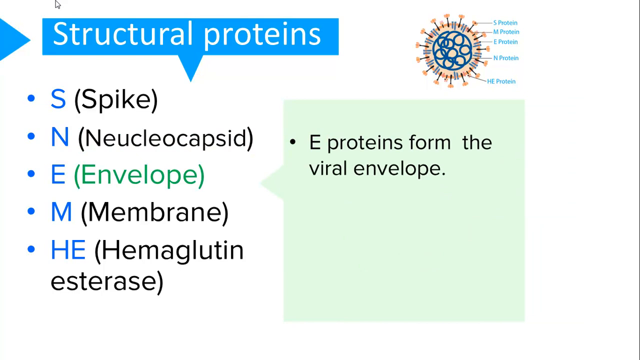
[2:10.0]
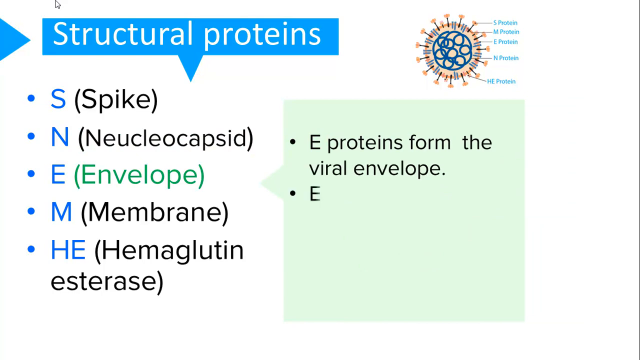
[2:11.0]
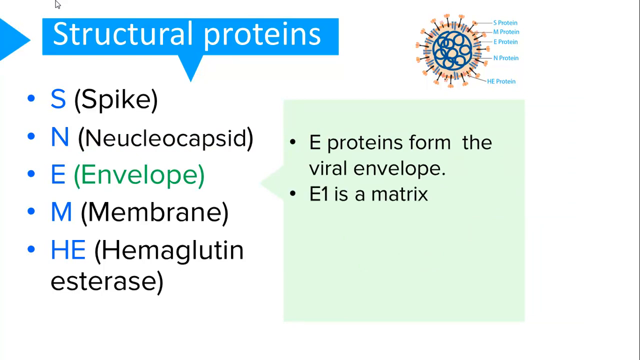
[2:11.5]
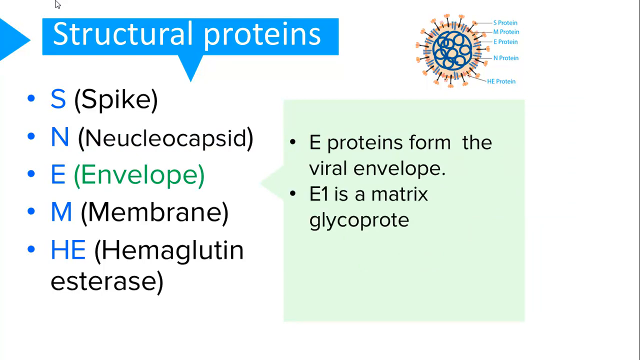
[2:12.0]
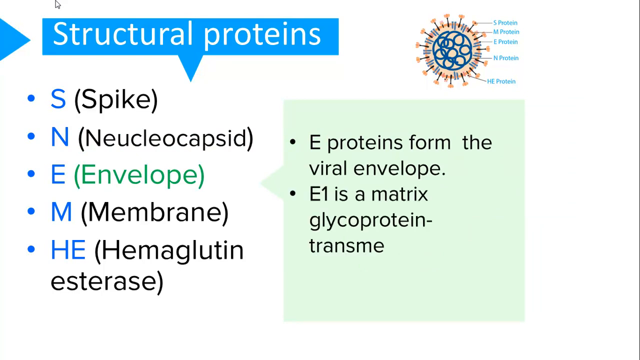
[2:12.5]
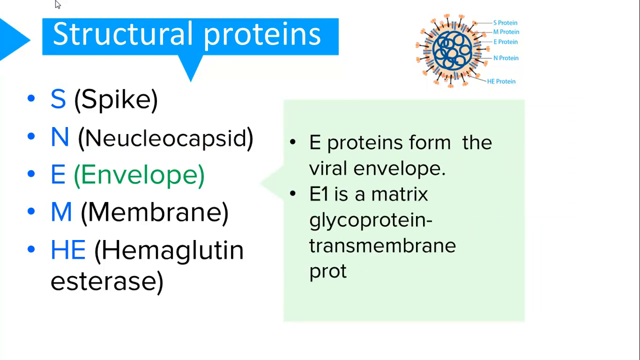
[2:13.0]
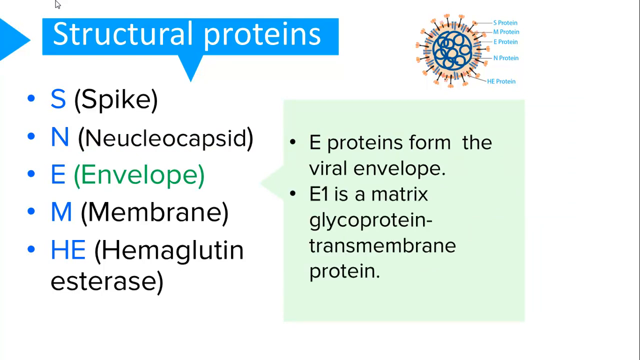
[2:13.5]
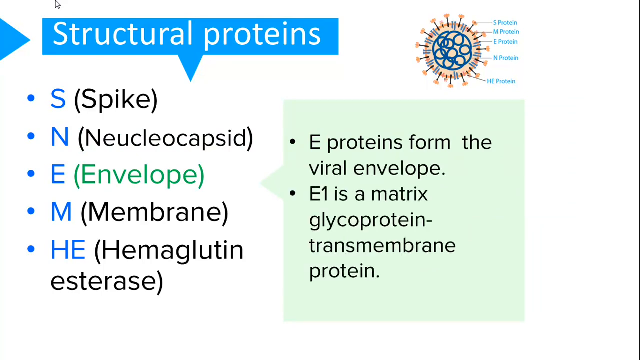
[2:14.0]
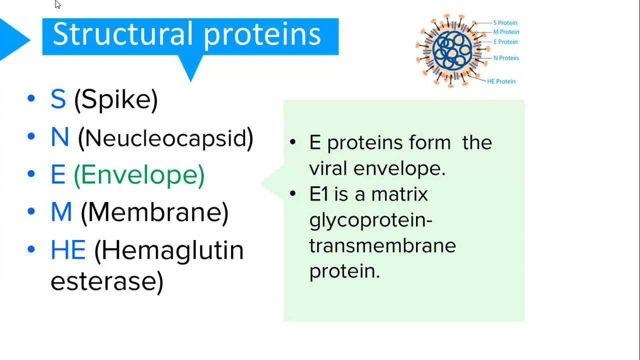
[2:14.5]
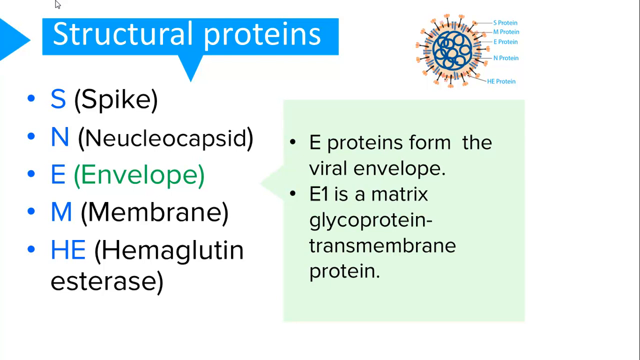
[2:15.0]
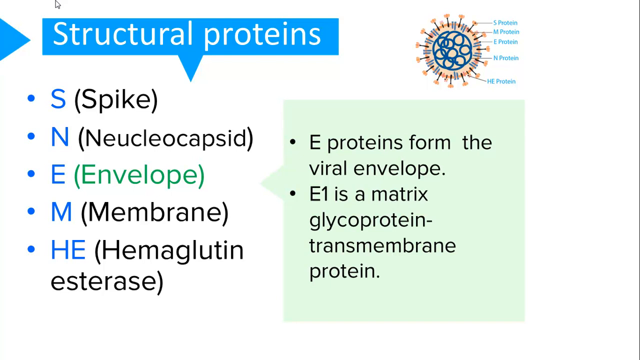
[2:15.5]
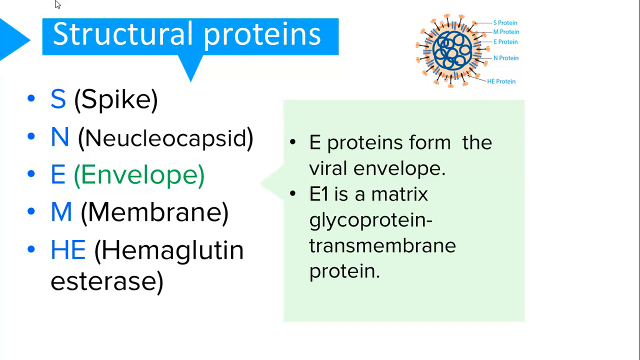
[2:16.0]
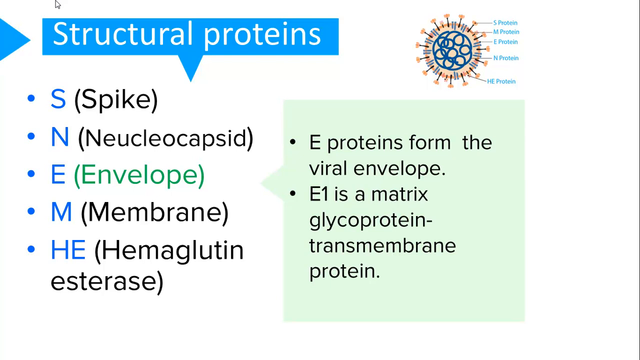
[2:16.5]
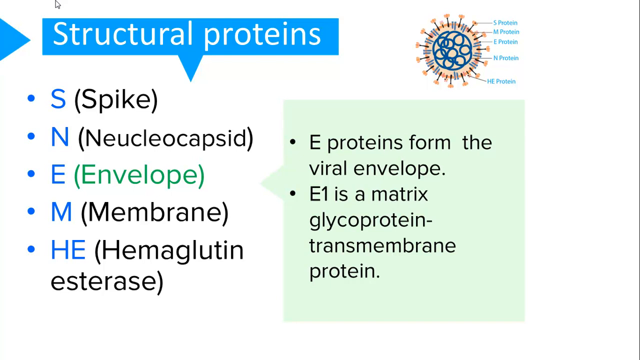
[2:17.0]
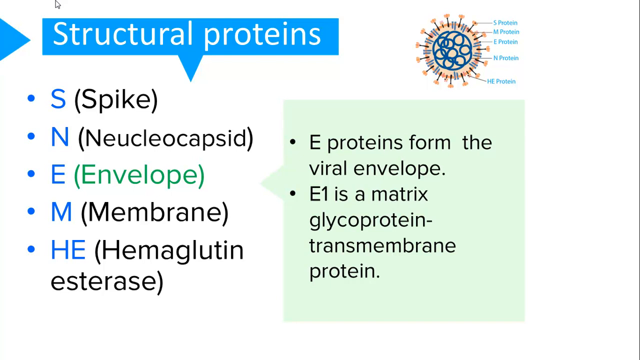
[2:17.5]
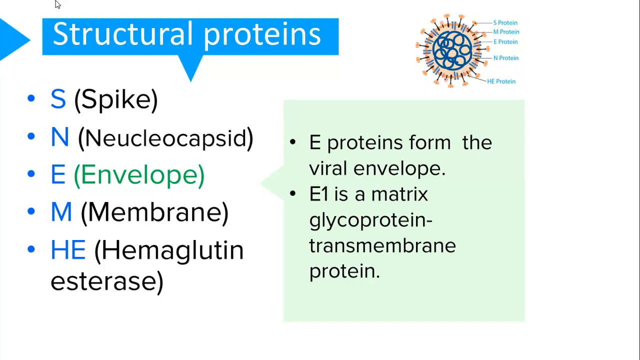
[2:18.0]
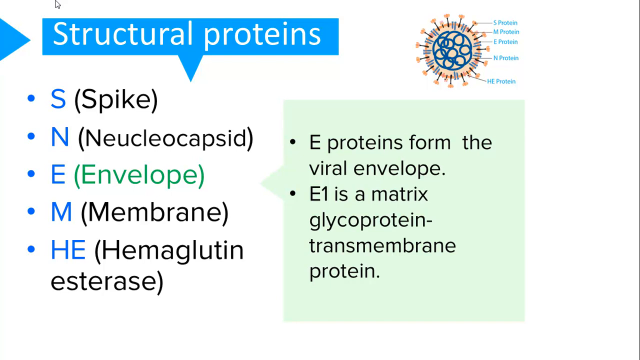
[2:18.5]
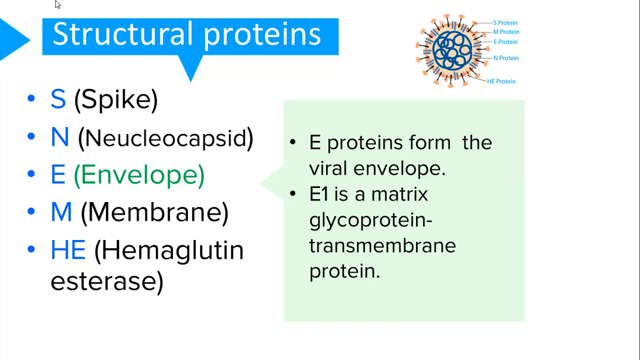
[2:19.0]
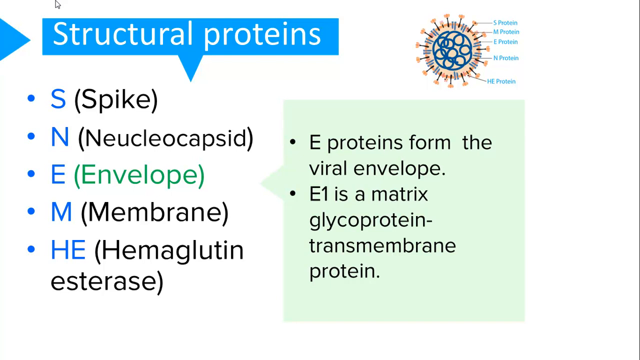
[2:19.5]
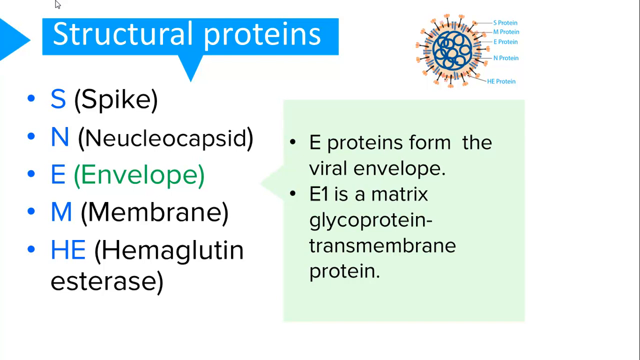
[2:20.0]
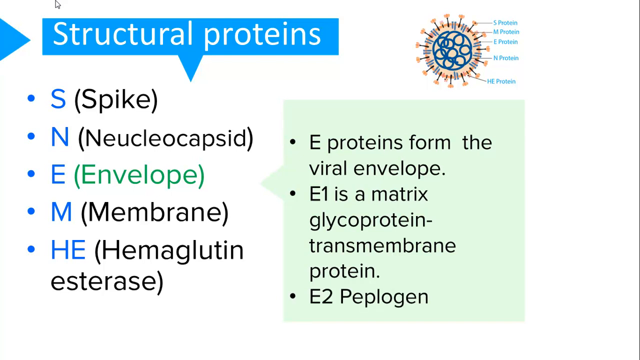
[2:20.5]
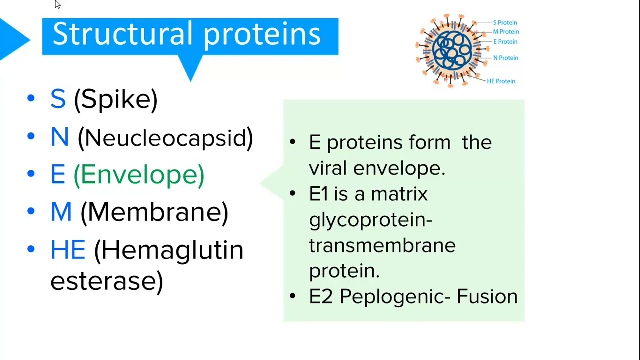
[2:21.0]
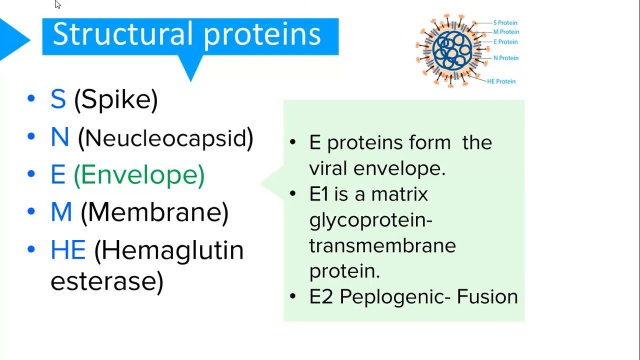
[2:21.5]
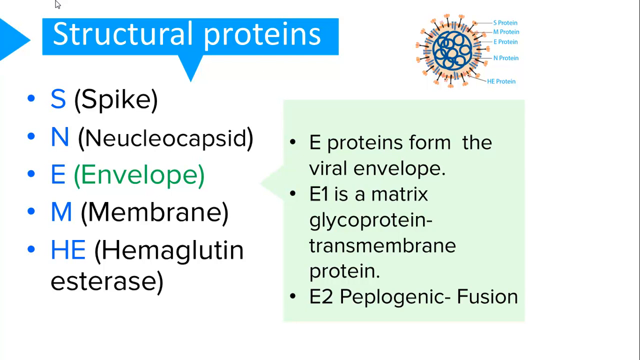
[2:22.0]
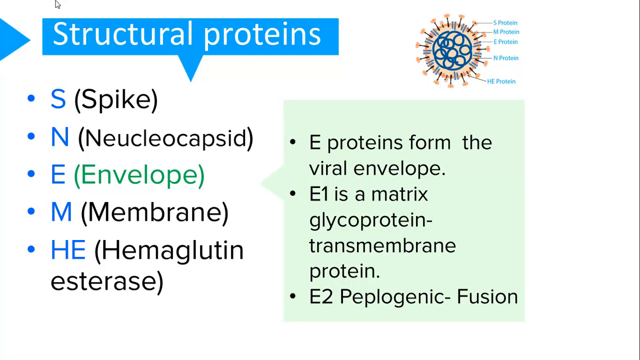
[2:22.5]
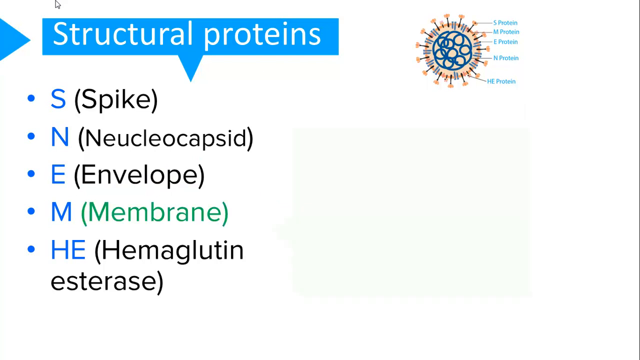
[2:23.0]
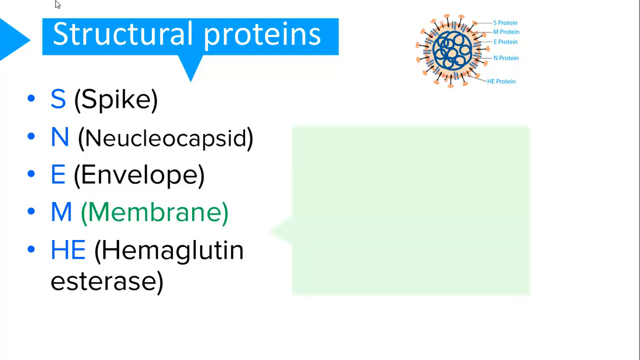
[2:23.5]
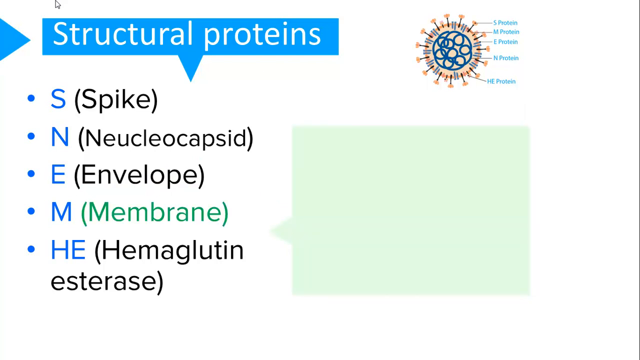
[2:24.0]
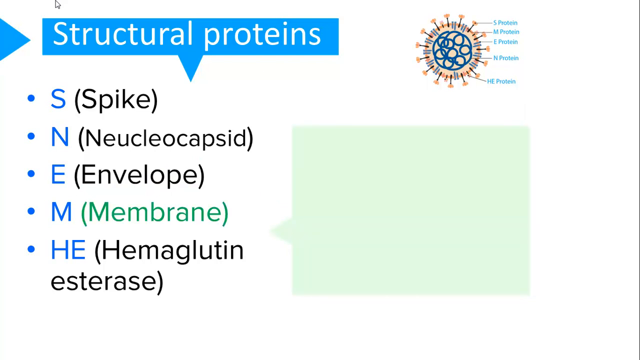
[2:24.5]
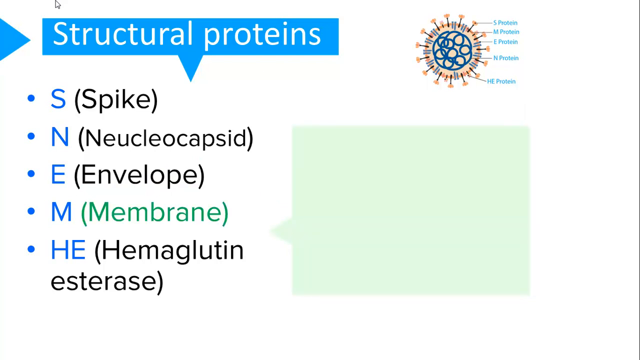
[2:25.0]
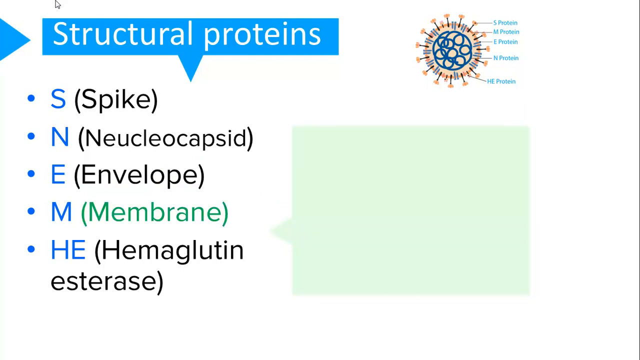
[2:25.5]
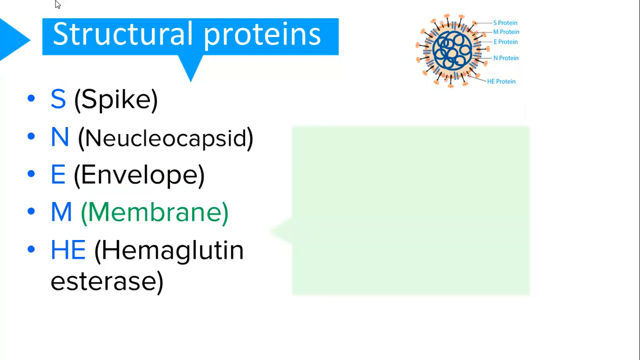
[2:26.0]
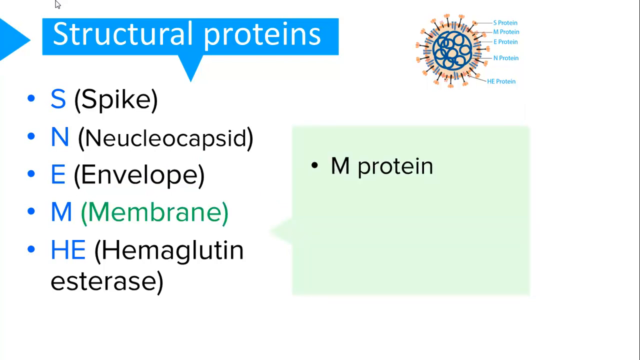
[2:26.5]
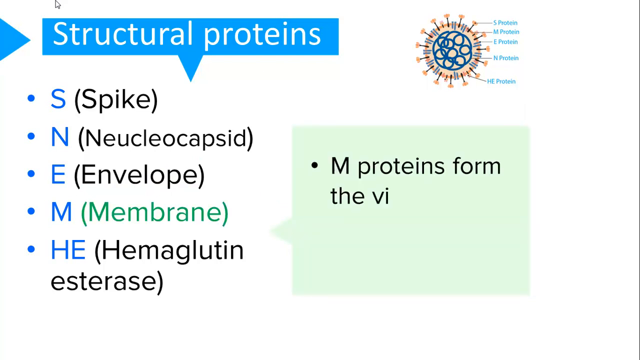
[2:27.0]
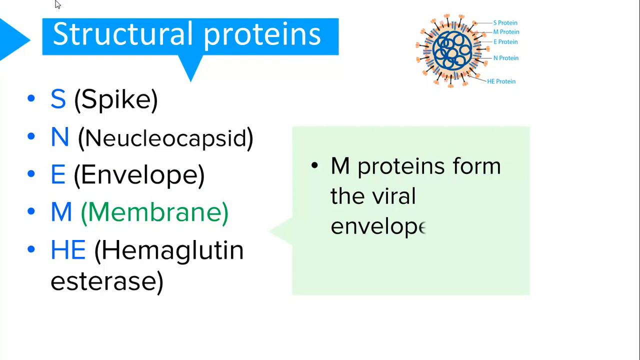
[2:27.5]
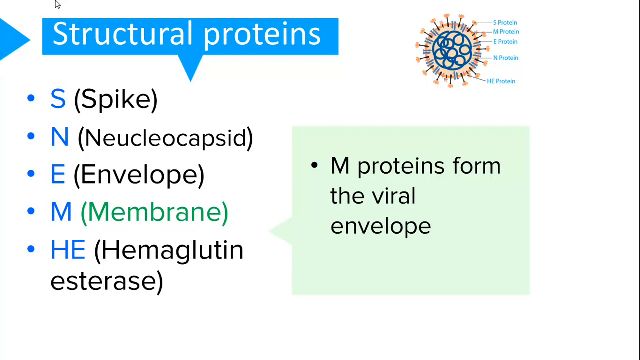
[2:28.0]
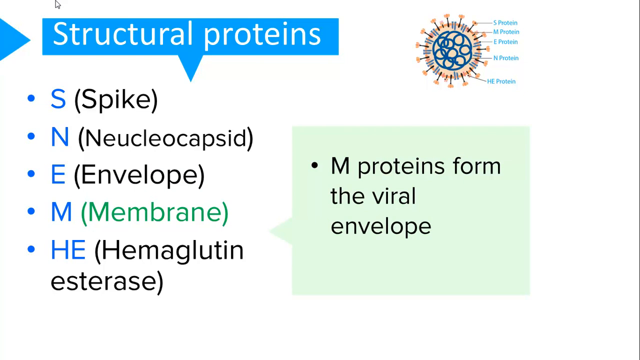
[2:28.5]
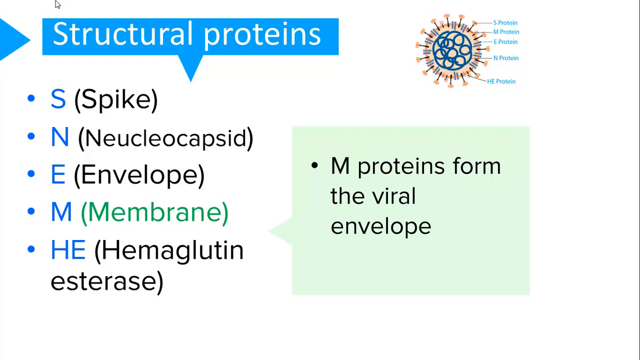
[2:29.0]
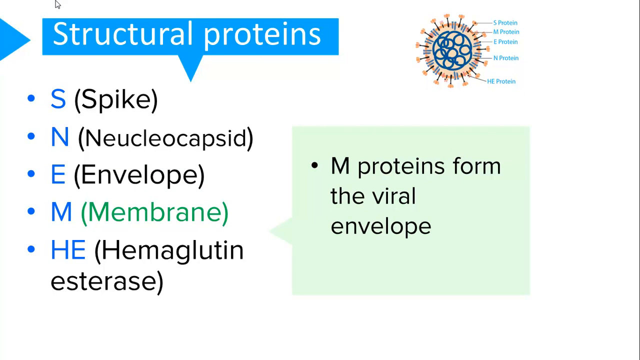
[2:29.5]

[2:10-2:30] The first bullet point says that the E proteins form the viral envelope. A second item underneath says that the E1 is a matrix glycoprotein trans membrane protein, and a third bullet point reads "E2 Cyclogenic Fusion". The M in the structural proteins list is now highlighted in green for membrane. The text box shortens and is smaller than the previous ones, still green in color. The title is still visible at the top of the screen, along with the small picture of the blue and orange COVID-19 virus with its proteins labeled in blue.